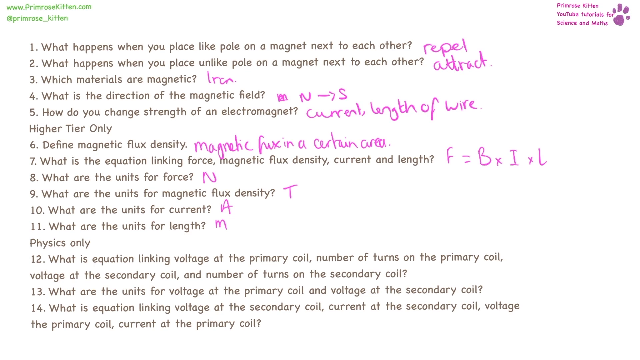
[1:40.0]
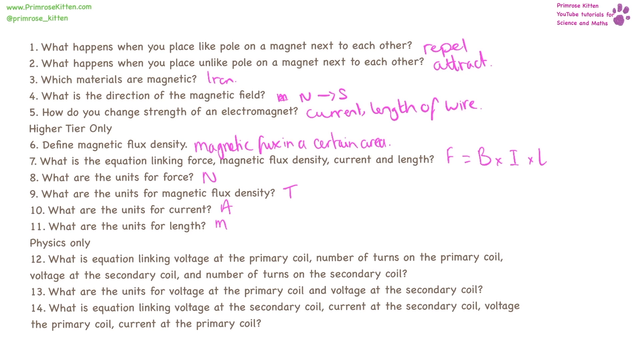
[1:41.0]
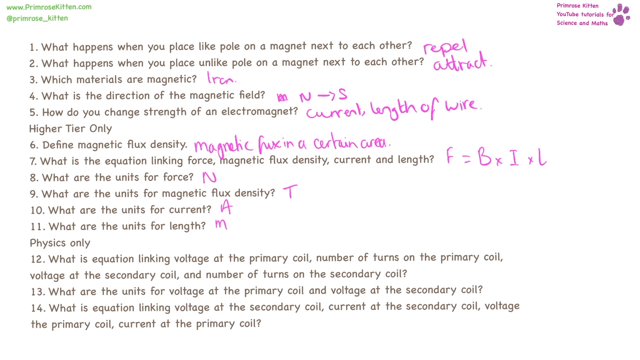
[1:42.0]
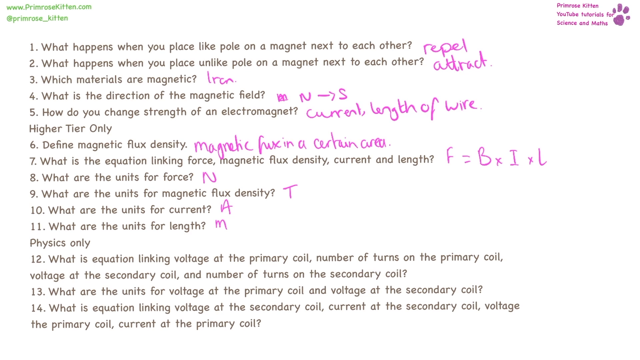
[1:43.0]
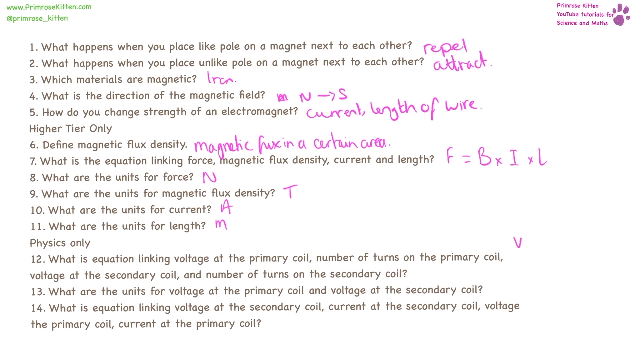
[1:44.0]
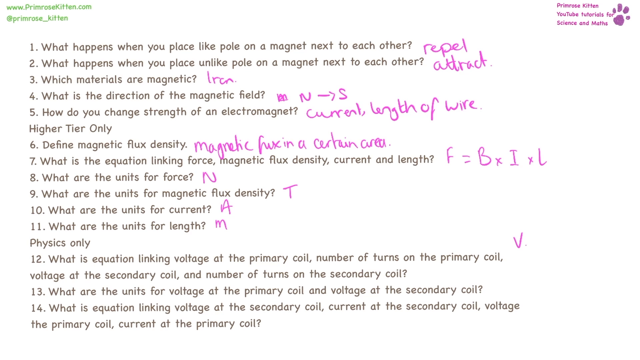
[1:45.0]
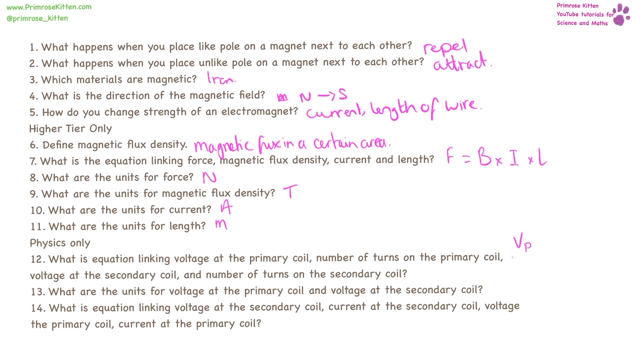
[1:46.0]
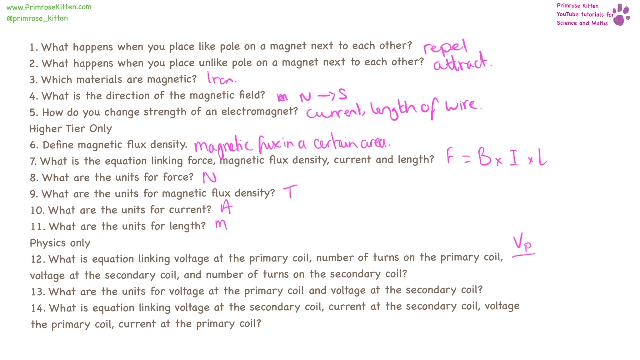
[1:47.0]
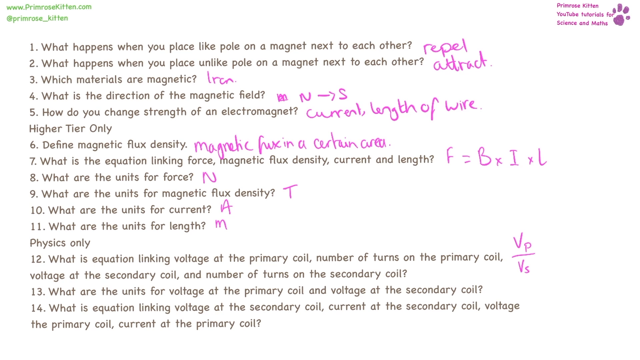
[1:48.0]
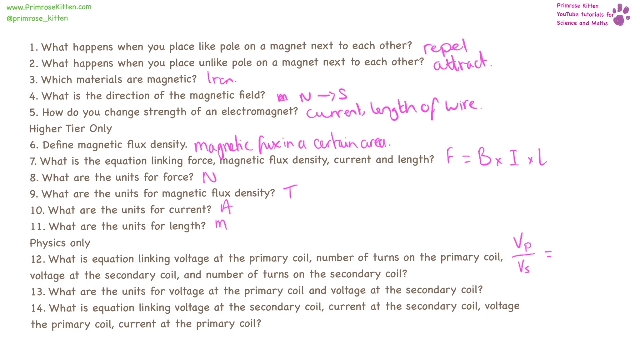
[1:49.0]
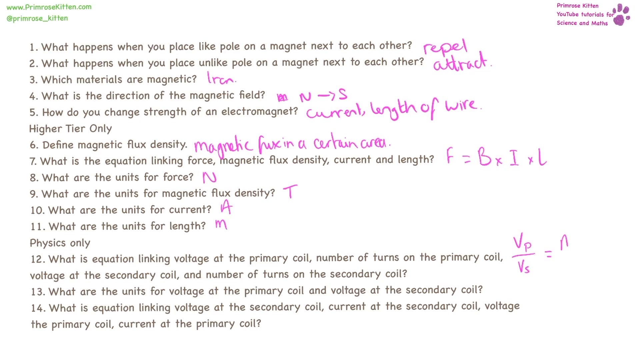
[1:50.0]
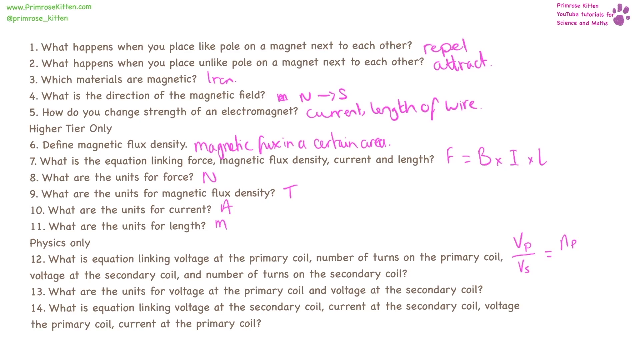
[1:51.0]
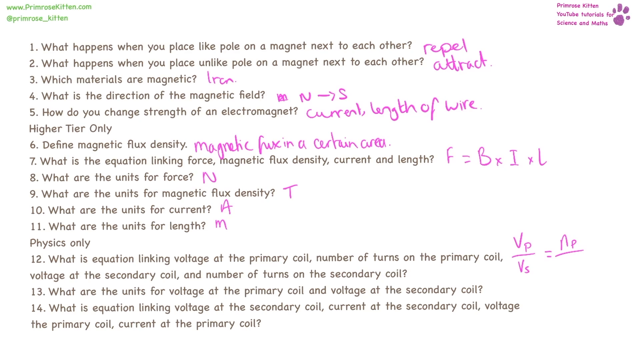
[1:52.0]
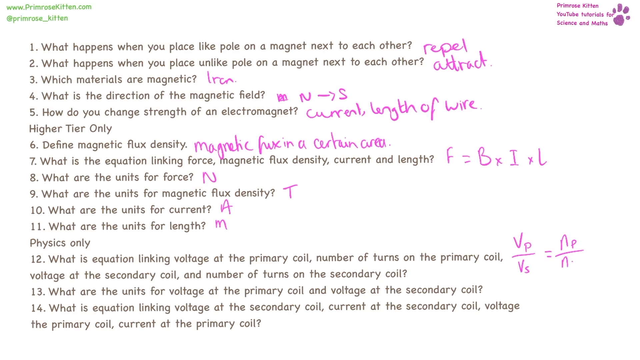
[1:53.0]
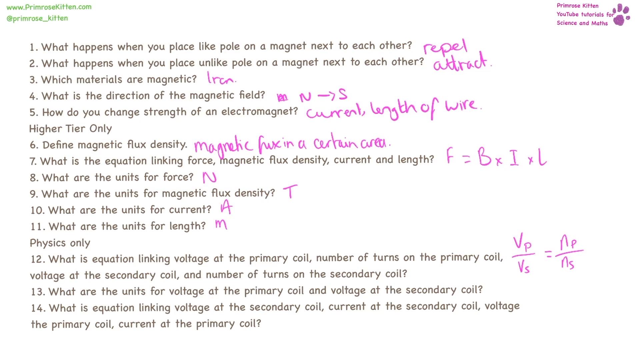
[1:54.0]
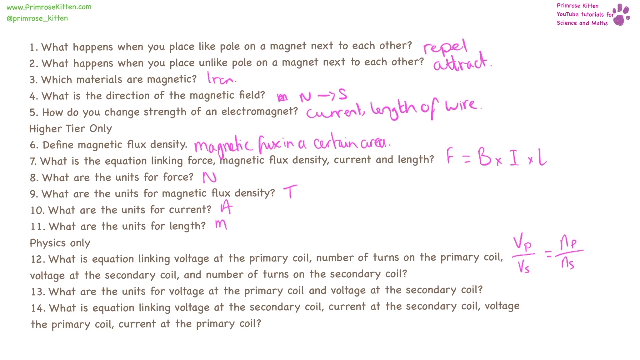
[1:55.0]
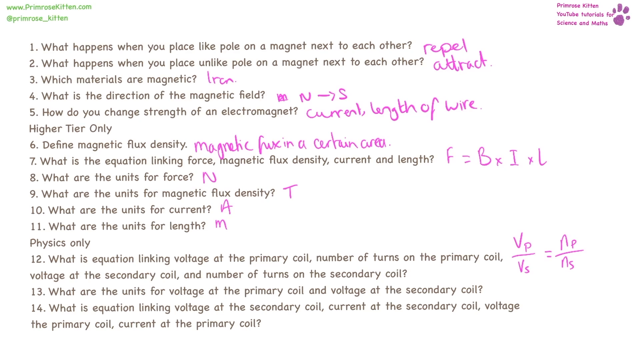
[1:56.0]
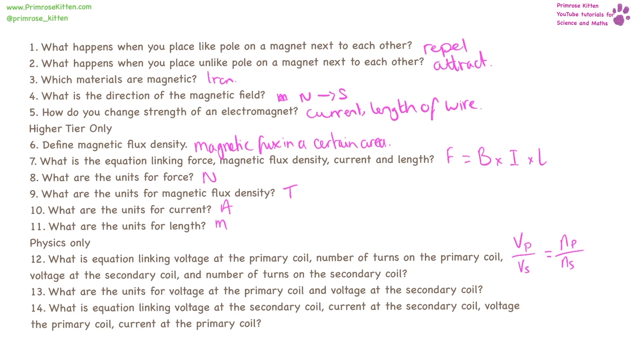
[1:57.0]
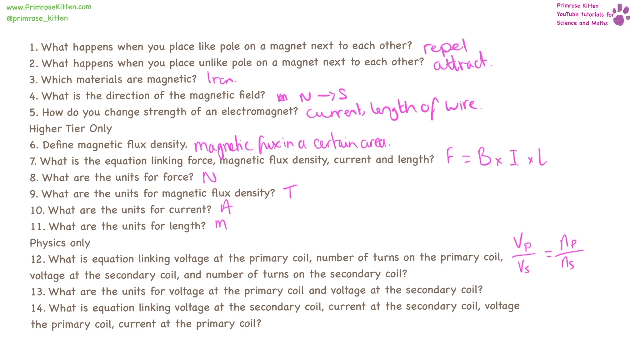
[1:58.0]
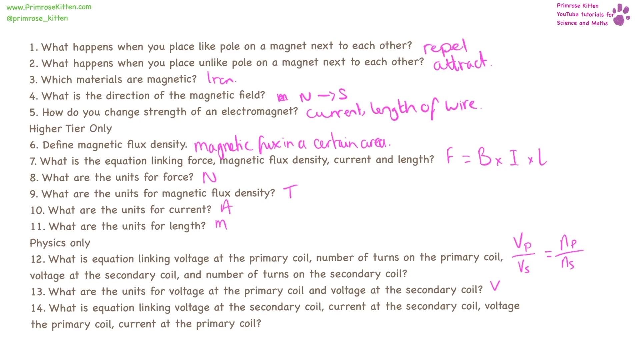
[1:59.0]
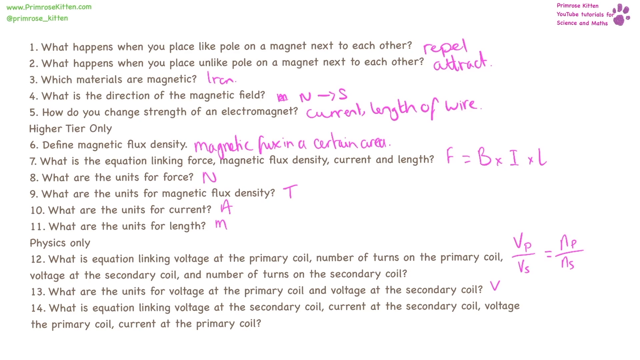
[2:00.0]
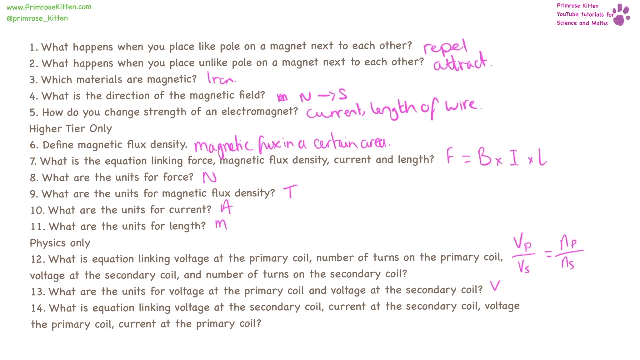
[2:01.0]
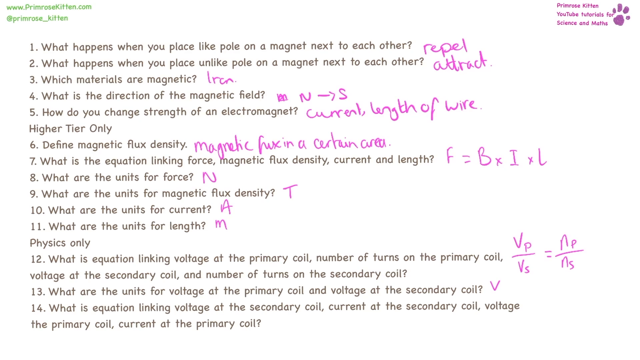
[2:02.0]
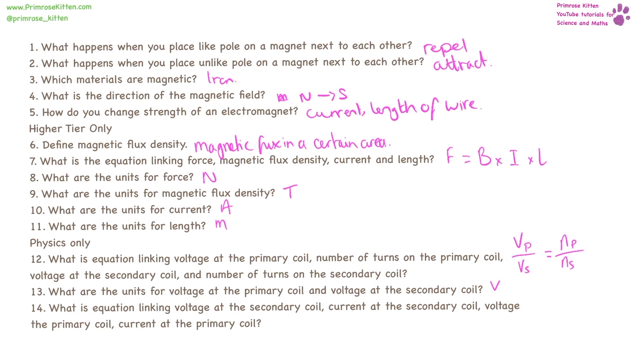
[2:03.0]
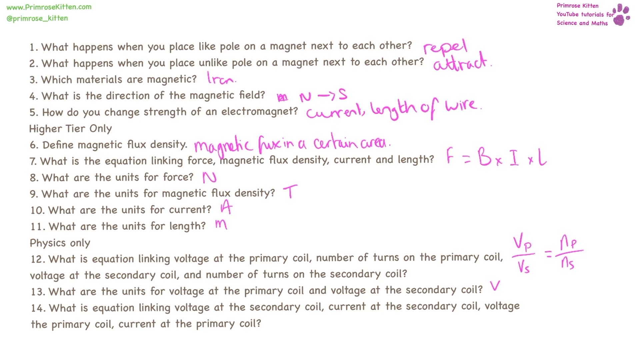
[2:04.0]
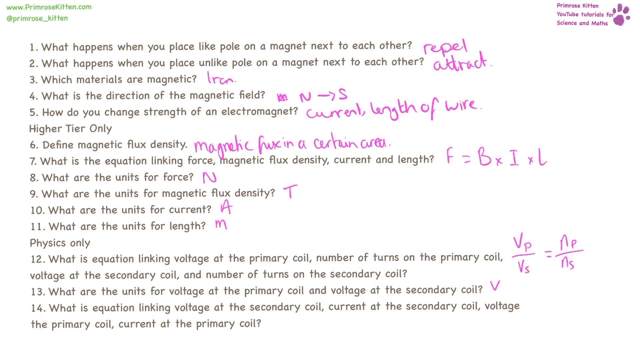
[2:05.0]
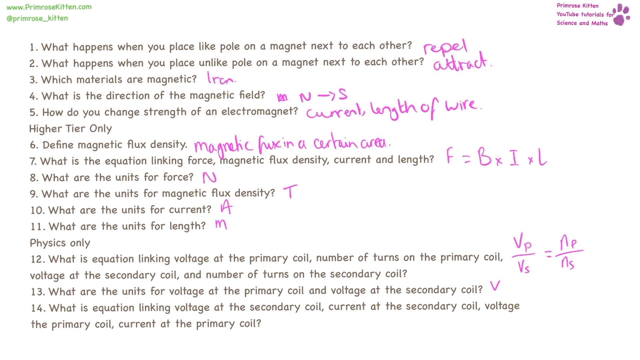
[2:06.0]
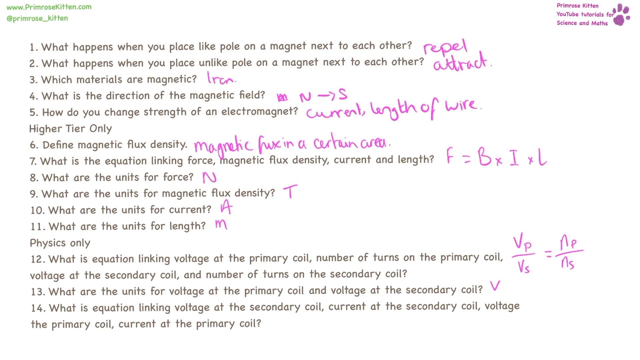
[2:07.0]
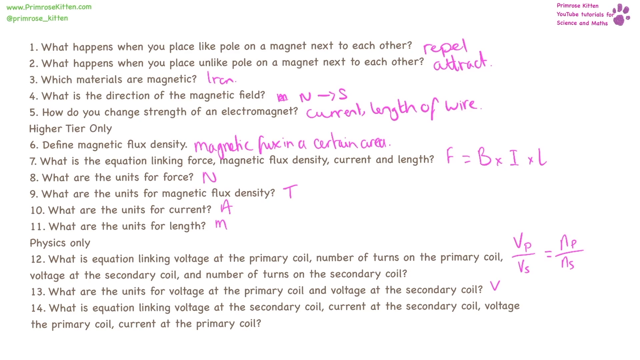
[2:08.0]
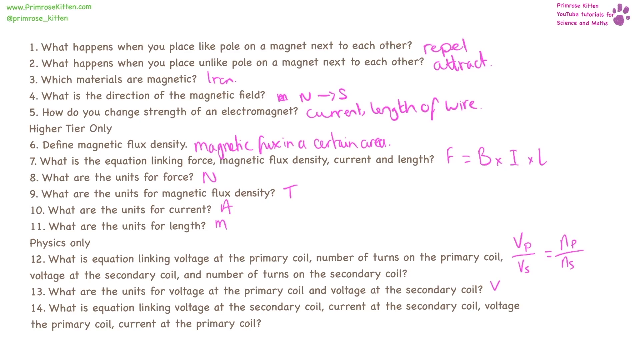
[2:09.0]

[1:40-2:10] The screen shows about 14 physics questions about magnets typed in black and divided into sections: questions 6 to 11 are labeled "high tier only" and 12 to 14 "physics only". Most are one-liners, except questions 12 and 14, which run to two lines. The top left has the Primrose Kitten website and Instagram handle in light green on two lines, along with the YouTube name and a paw logo. Answers up to question 11 are already complete in red pen, written freehand in thin strokes. The answer to question 12 is written as "Vp/Vs=np/ns", and for question 13, which asks for the unit of voltage, "V" is written.